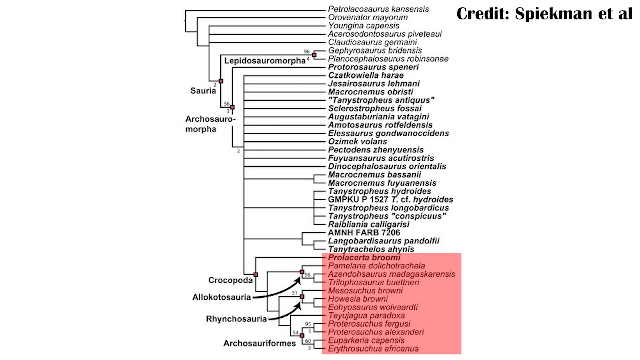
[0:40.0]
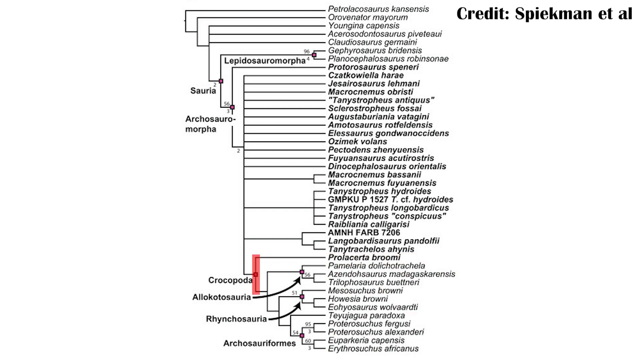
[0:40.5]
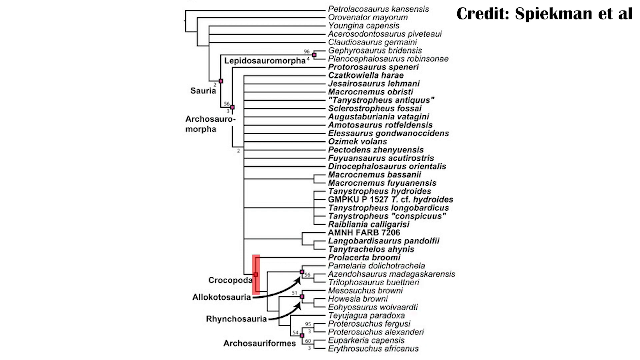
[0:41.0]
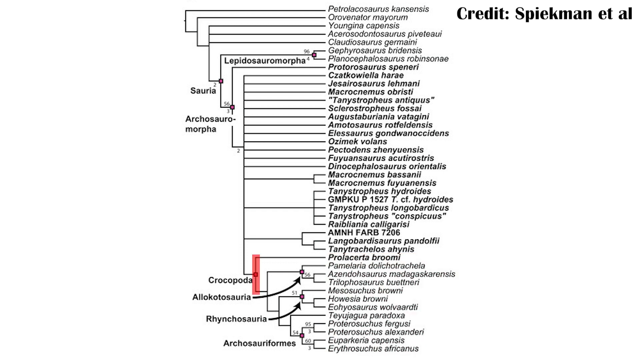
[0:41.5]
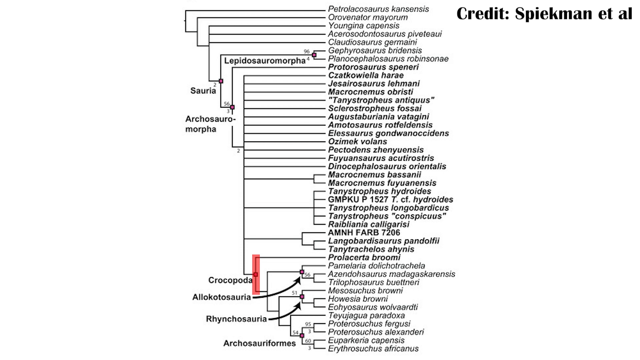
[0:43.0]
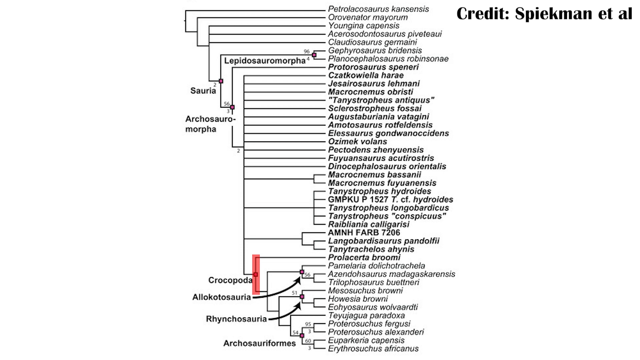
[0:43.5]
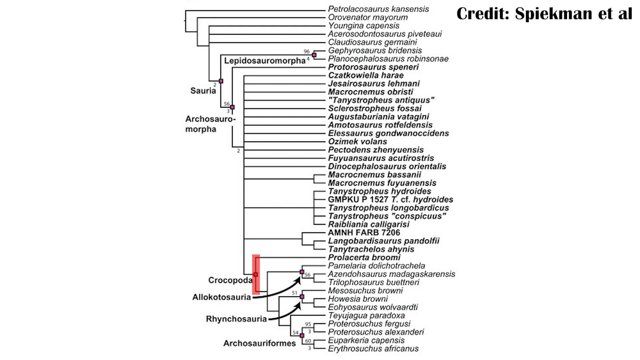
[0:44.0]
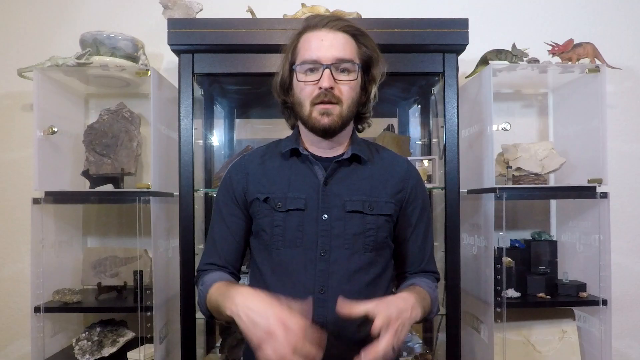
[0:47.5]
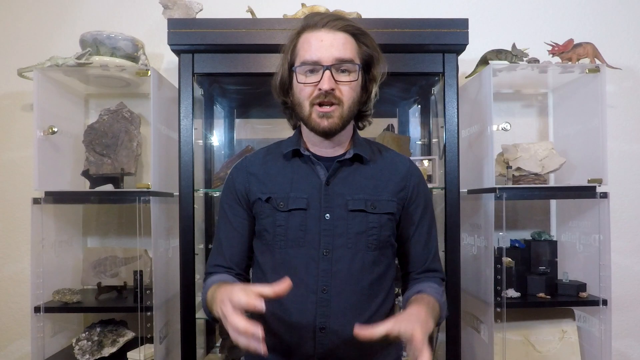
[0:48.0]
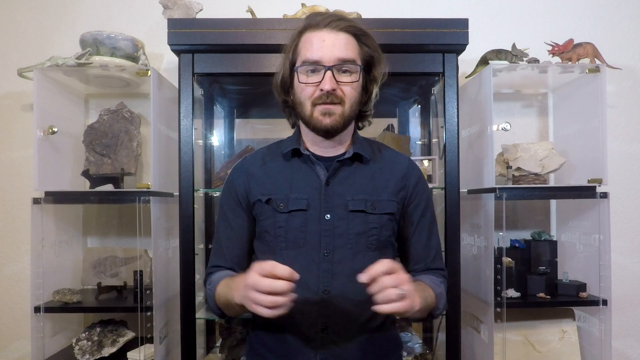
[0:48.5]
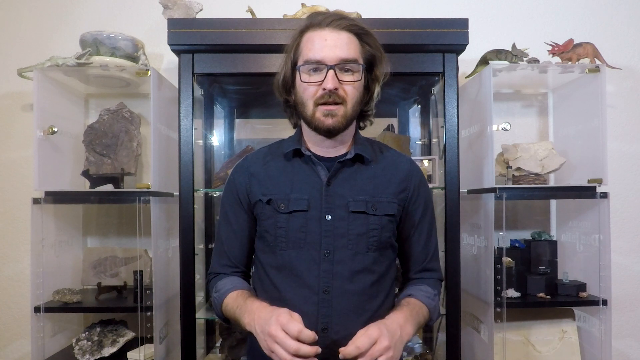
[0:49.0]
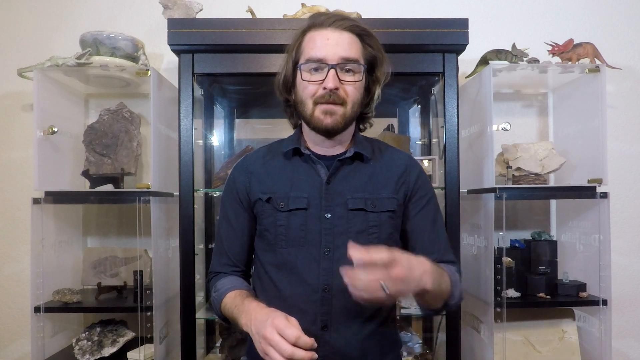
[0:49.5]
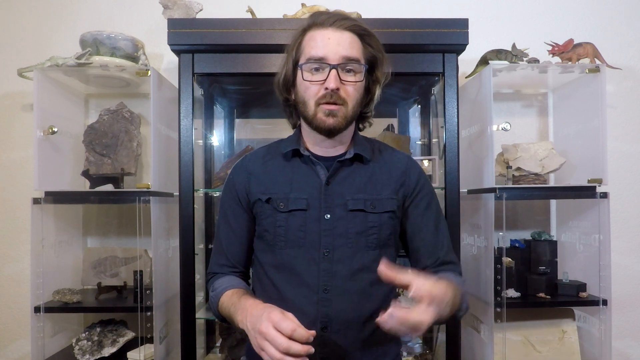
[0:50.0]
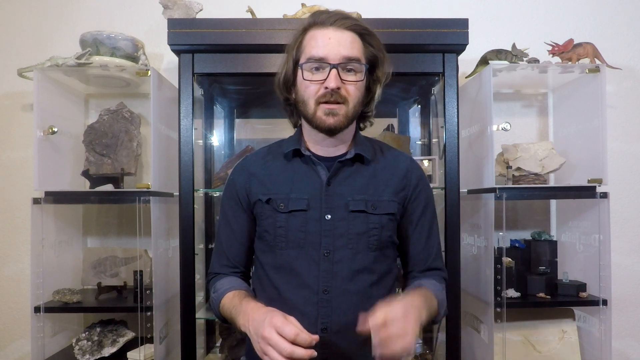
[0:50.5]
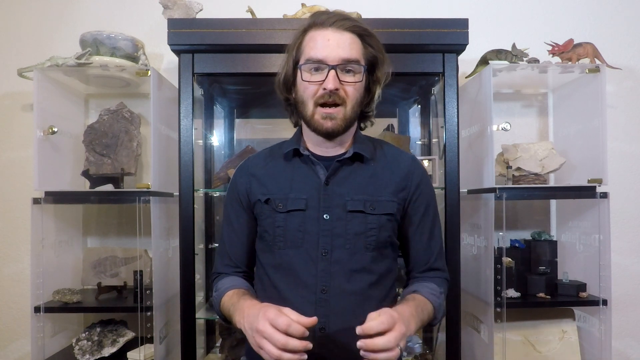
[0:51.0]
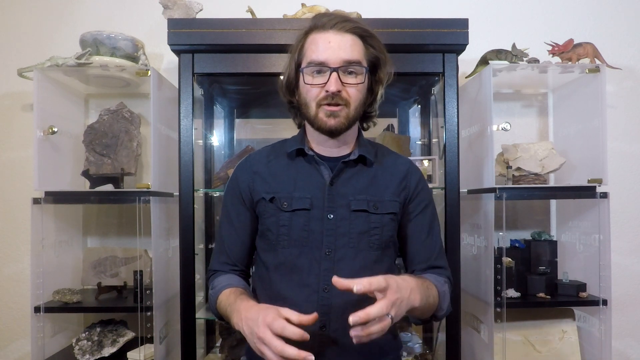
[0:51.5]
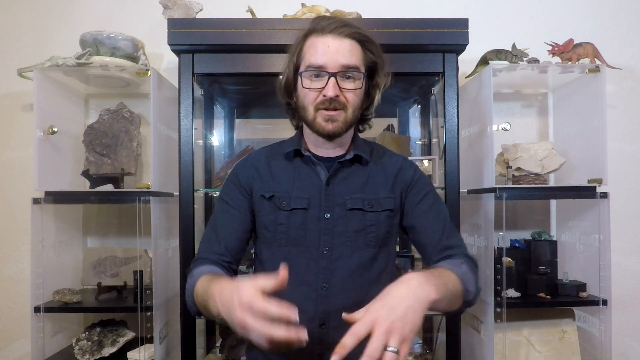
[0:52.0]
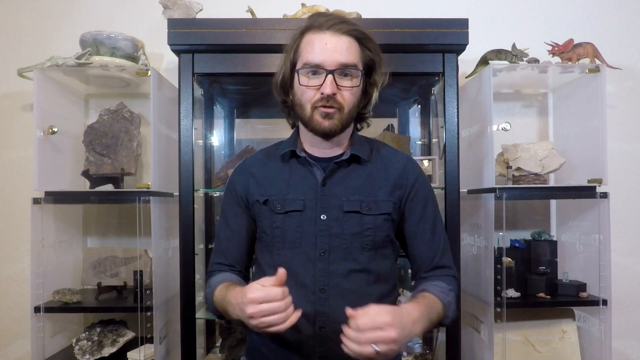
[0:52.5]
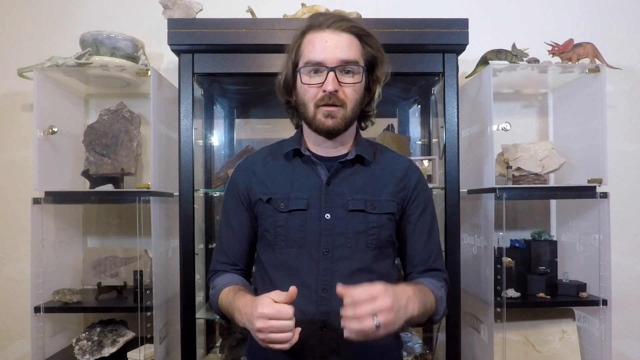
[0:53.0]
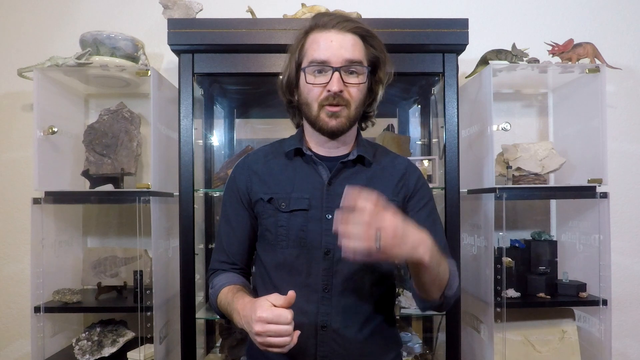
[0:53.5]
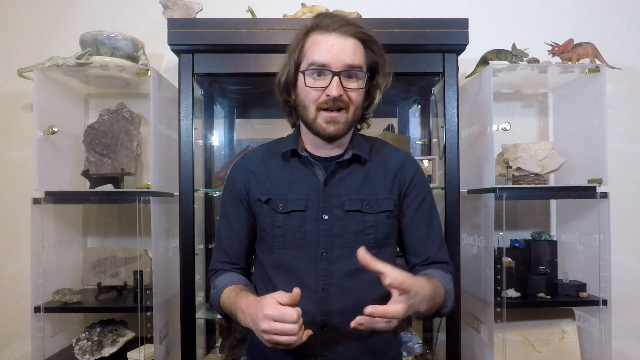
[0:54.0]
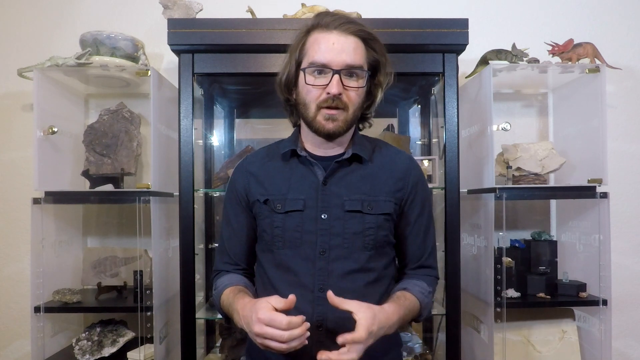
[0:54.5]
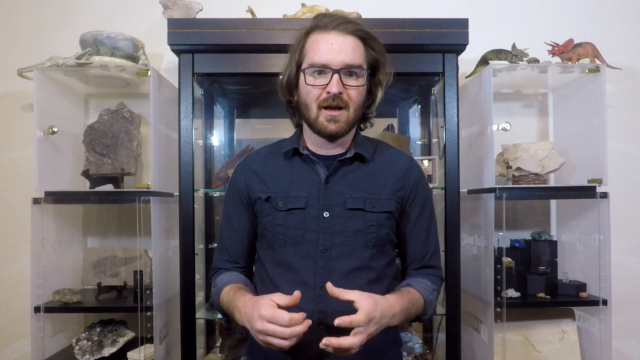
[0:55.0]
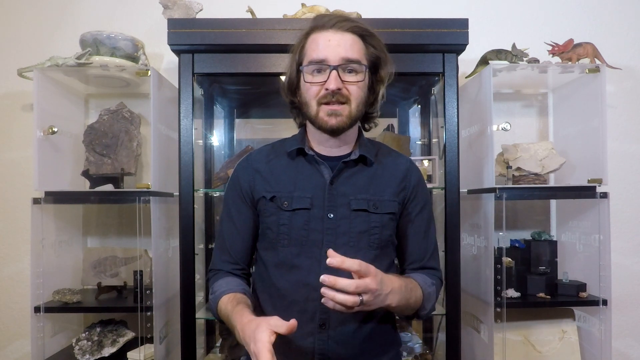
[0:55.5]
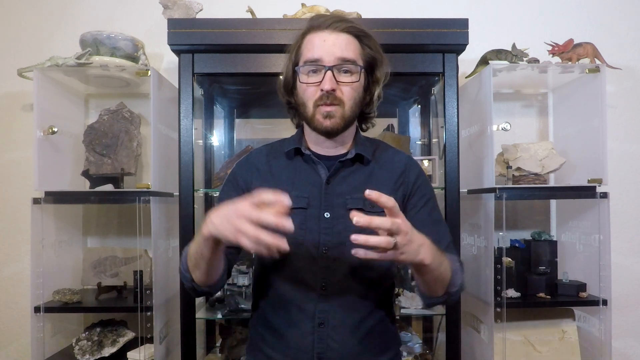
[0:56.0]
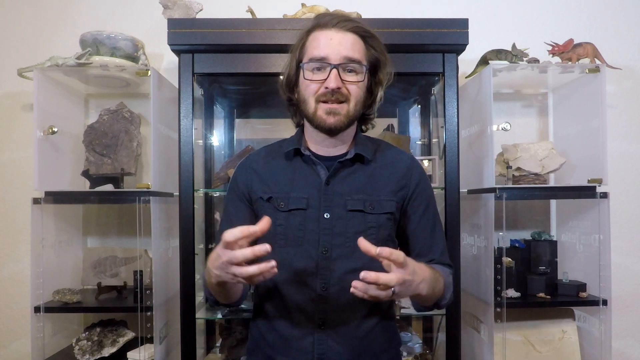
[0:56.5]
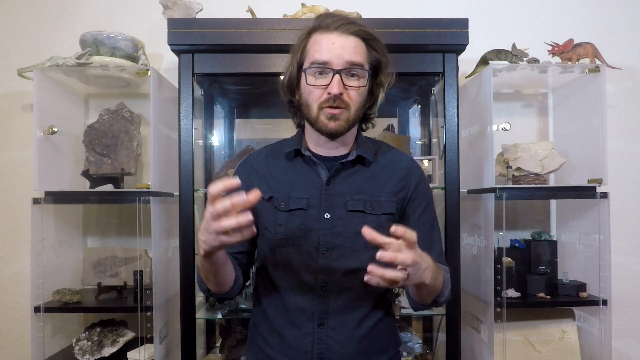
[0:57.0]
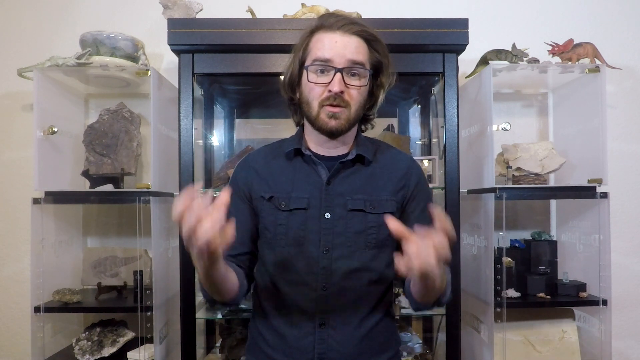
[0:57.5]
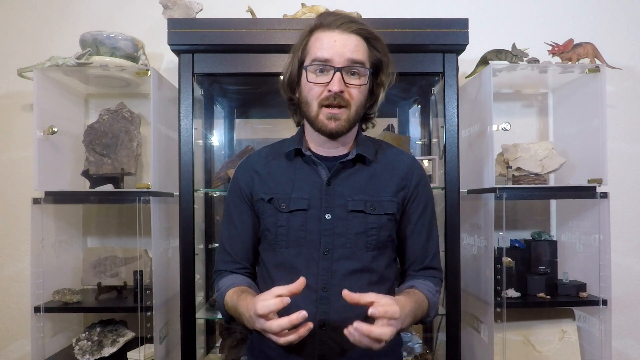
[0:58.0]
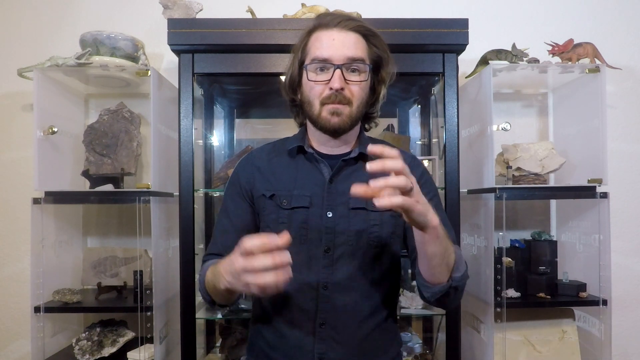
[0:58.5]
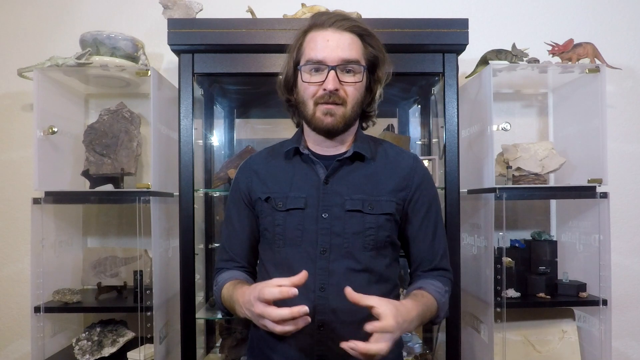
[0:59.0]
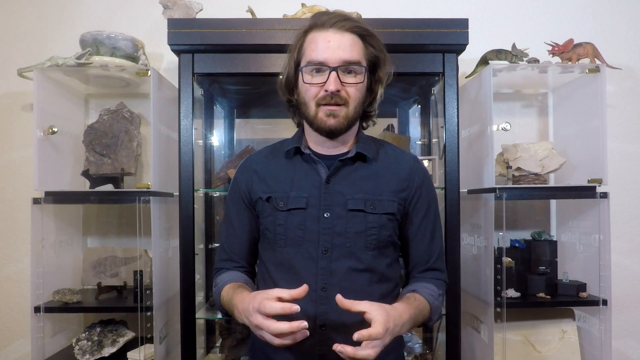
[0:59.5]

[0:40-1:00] Part of the tree branch for "Krokopoda", before it branches out to other sections, is highlighted in pink. The phylogenetic tree shows the evolutionary relationships among extinct animals, and the branch it focuses on is Krokopoda. There are other branches, such as "Rhinocerea", which apparently has 51 names: before the tree branches out there is sometimes a dot with a number next to it. A credit in the top right corner says "credit Spikeman et al". The video then goes back to the host, still in the same room and making the same kind of hand gestures, mostly moving his left hand while his right hand stays kind of stationary against his chest. Sometimes he lifts both hands and makes sweeping gestures.